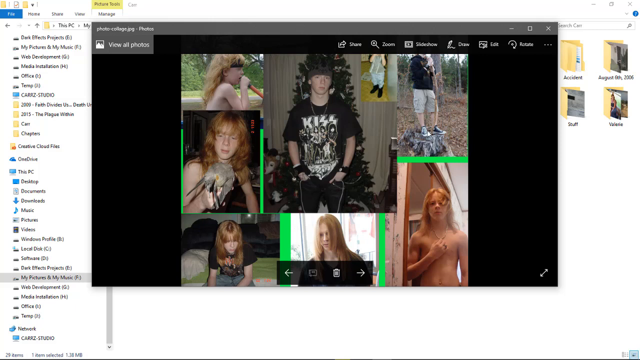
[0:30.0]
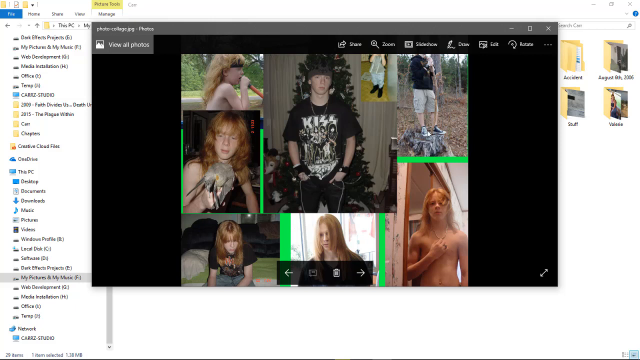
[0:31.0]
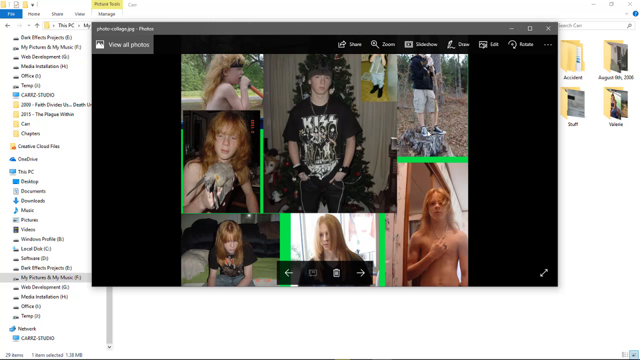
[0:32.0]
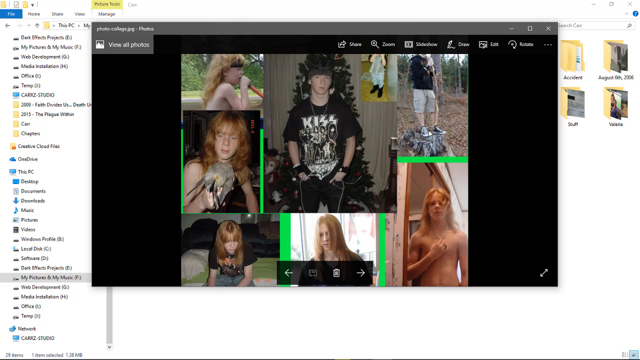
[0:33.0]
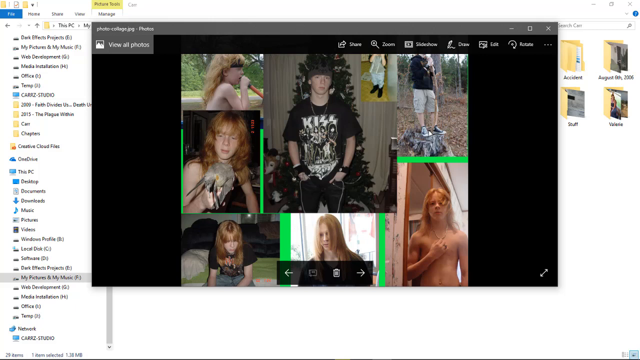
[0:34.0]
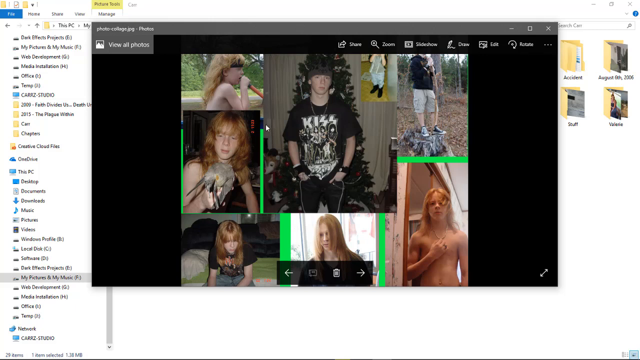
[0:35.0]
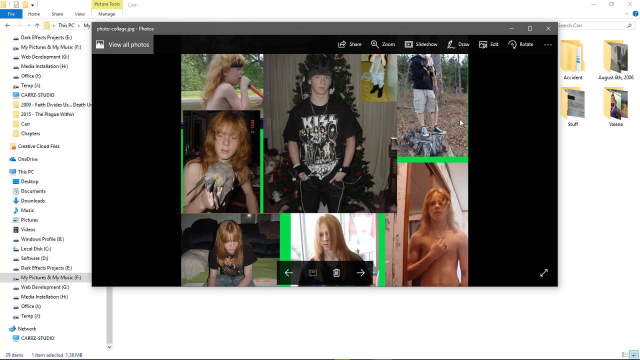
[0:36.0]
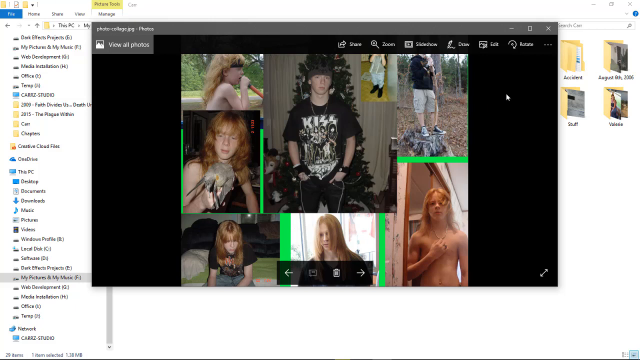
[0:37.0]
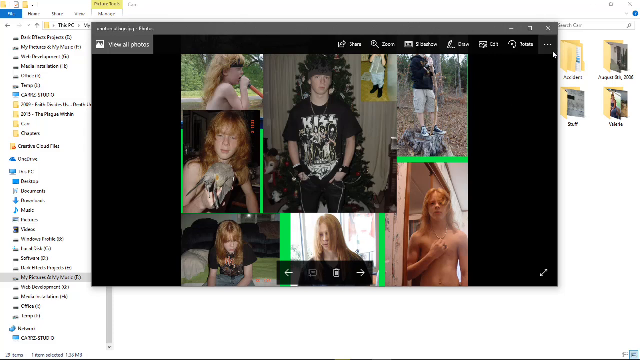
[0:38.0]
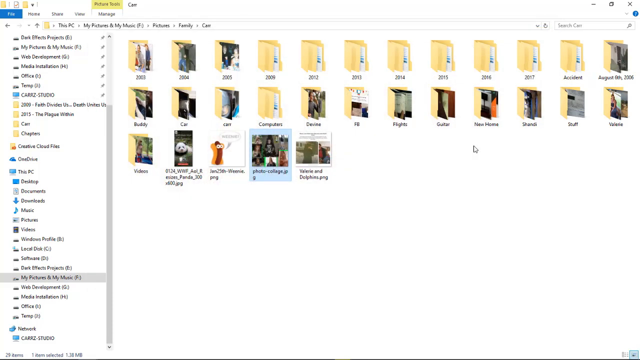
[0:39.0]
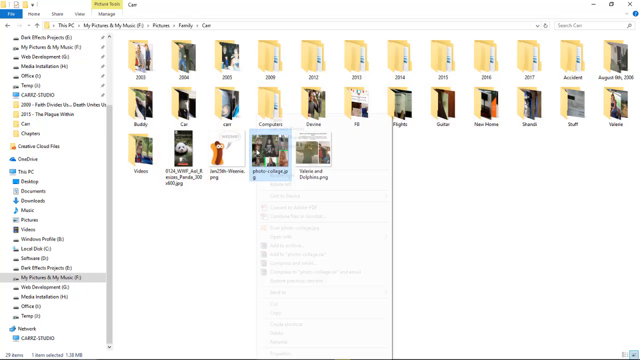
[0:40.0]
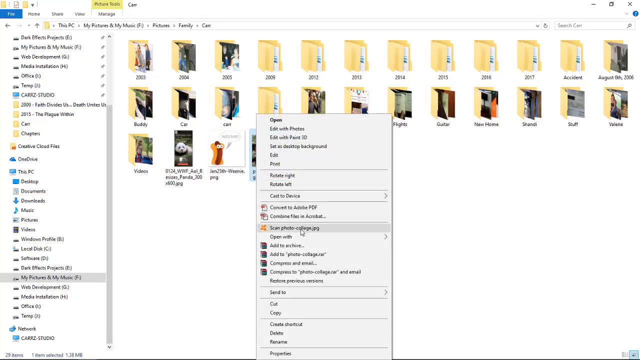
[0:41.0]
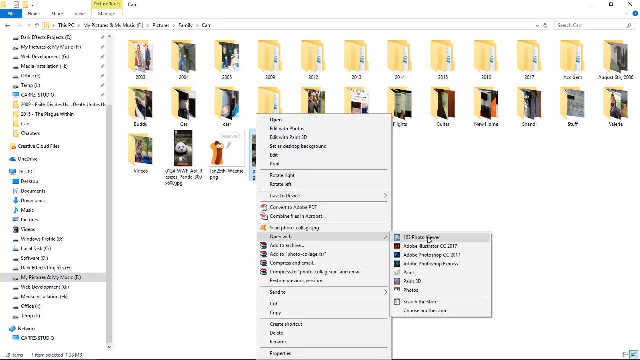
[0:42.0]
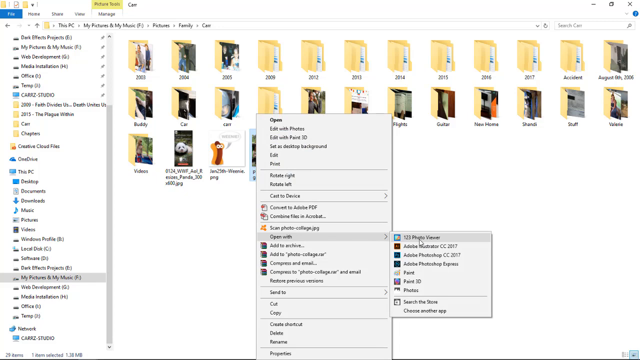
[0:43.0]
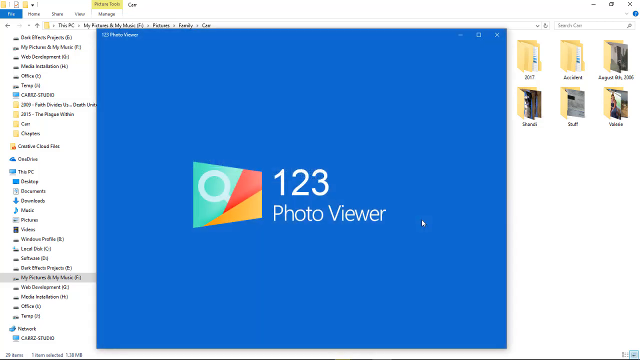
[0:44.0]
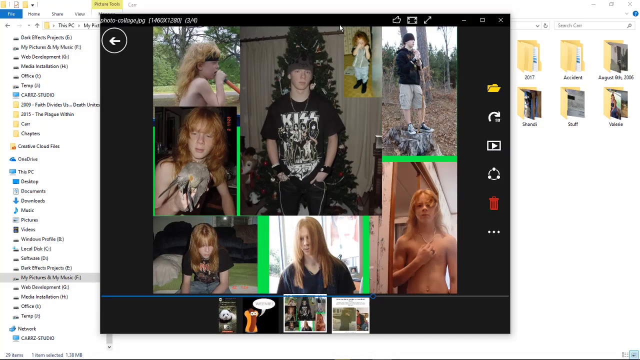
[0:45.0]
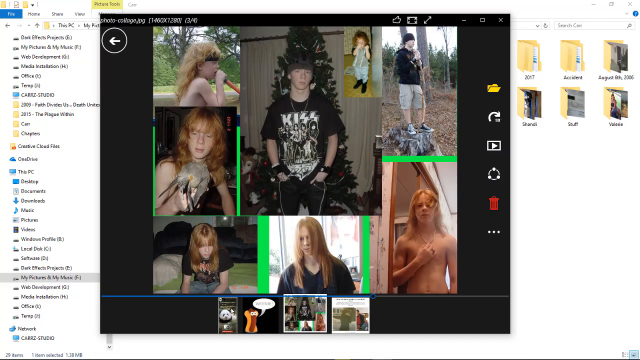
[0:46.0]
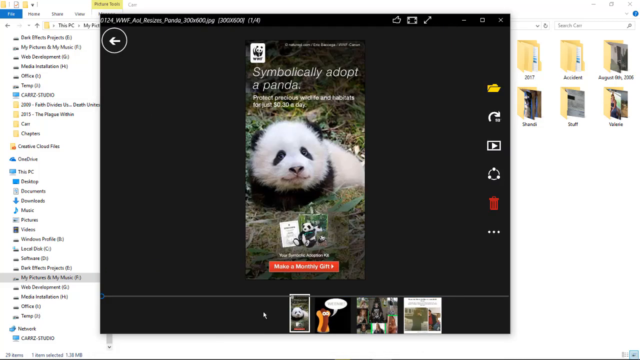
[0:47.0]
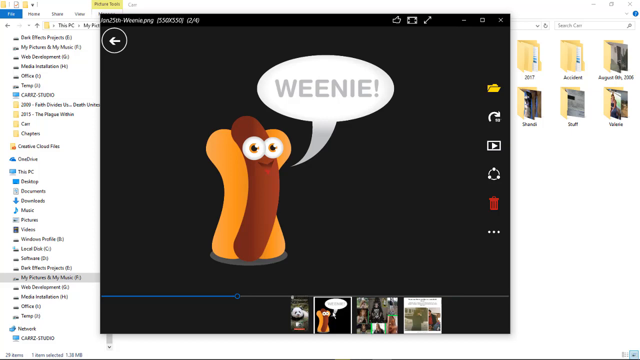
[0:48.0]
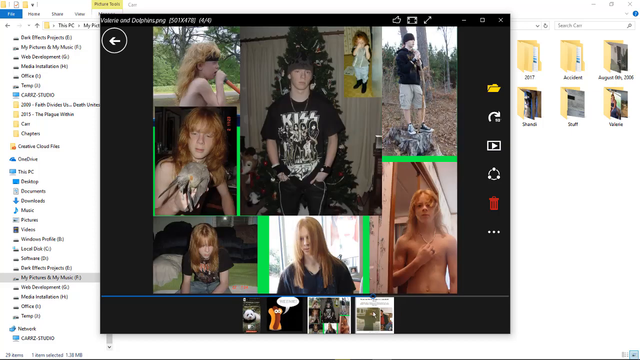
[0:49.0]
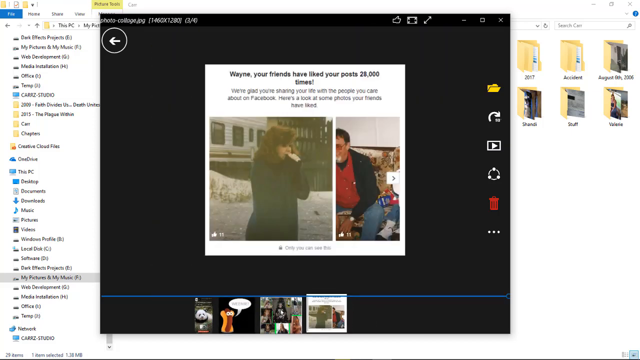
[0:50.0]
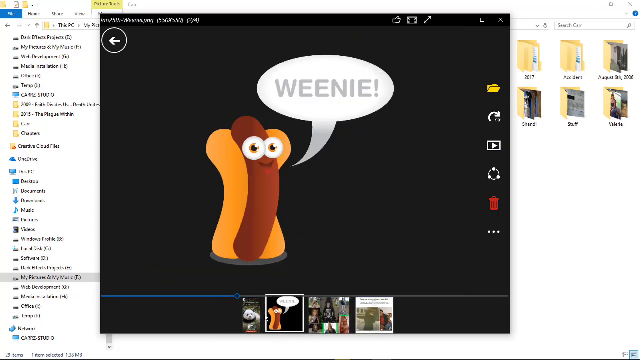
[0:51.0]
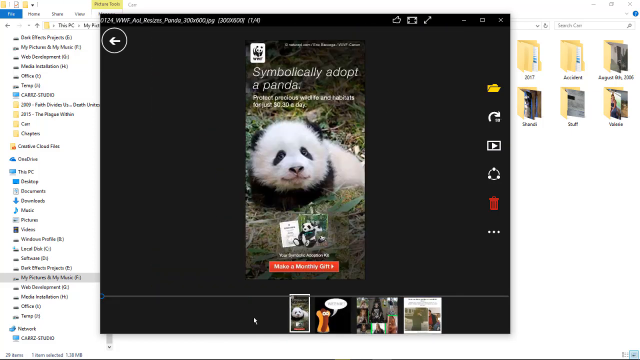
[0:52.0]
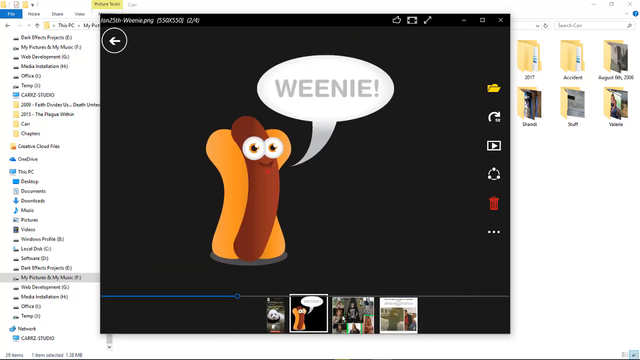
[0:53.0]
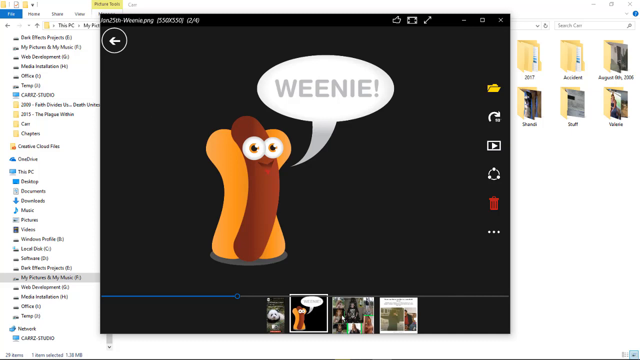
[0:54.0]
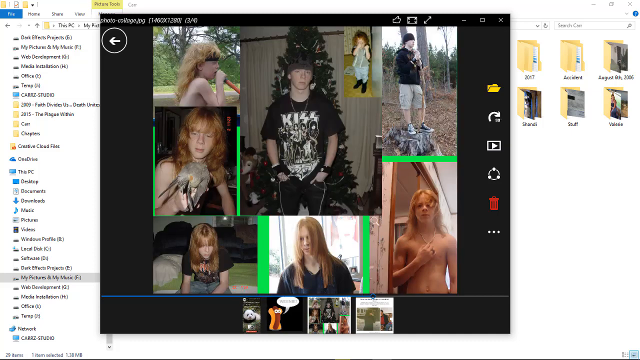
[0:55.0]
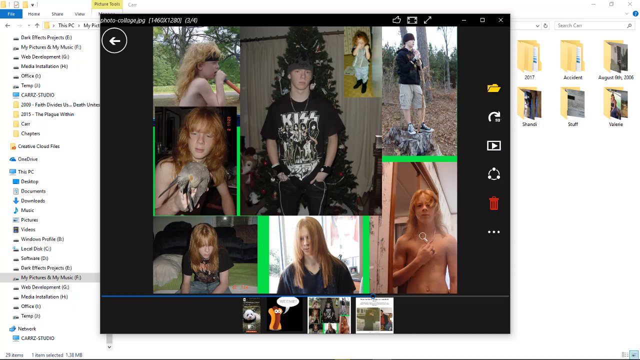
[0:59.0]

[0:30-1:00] A window on a computer screen shows a collage of photos of a person in different scenarios. The person seems to have long hair; in one picture he has no shirt on and his arm is by his chest. Right in the middle there seems to be one where he wears a black KISS shirt with white graphics, with pictures surrounding it, seemingly of the same person with long, somewhat reddish hair. The user clicks off of it and the screen returns to one with a lot of other folders. They seem to right-click on one of the icons, a gray menu pops up, and they select one of the options. The view returns to the window with all the pictures, and he seems to scan through them, showing a panda and then an animated hot dog.